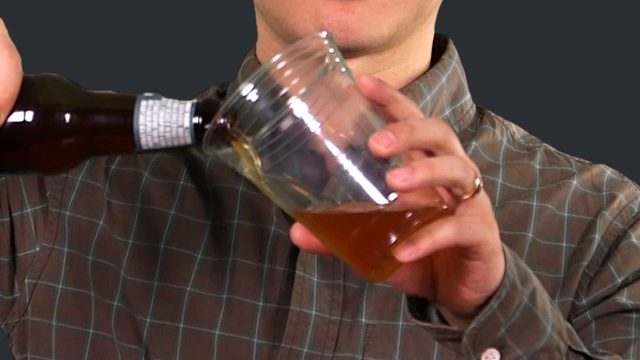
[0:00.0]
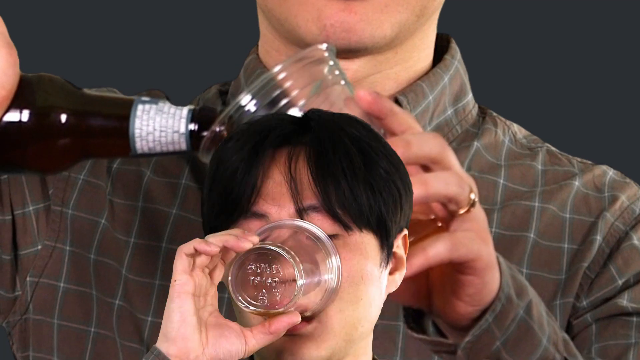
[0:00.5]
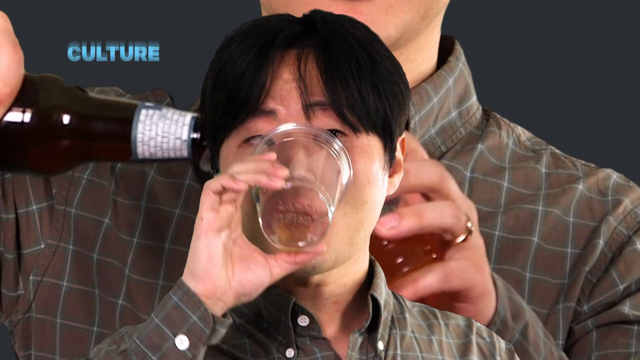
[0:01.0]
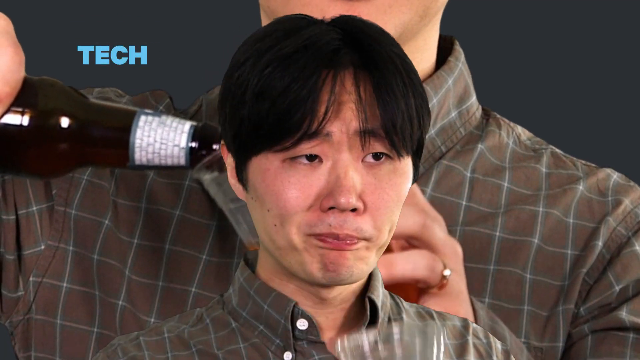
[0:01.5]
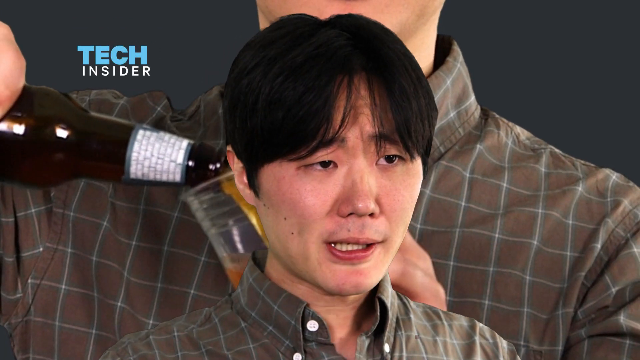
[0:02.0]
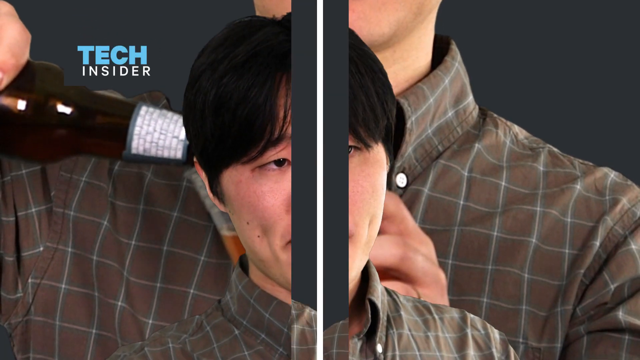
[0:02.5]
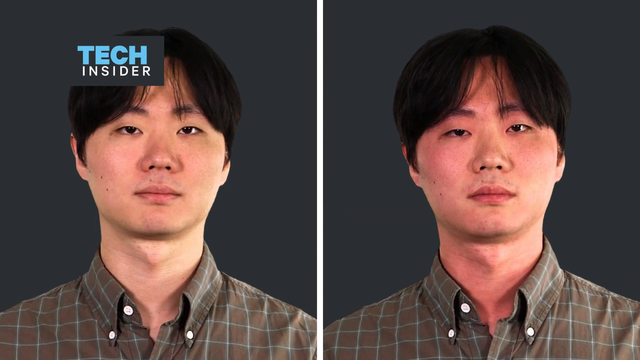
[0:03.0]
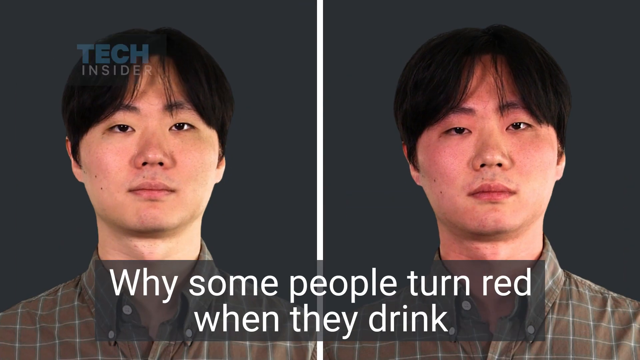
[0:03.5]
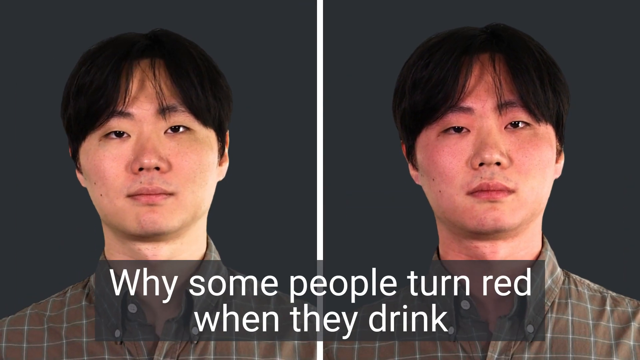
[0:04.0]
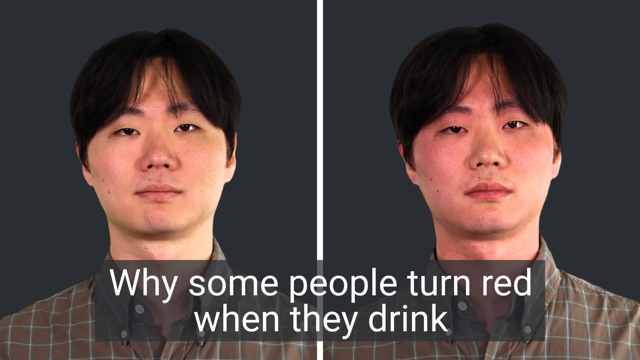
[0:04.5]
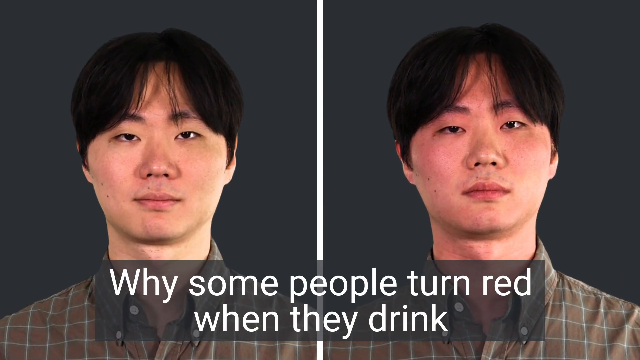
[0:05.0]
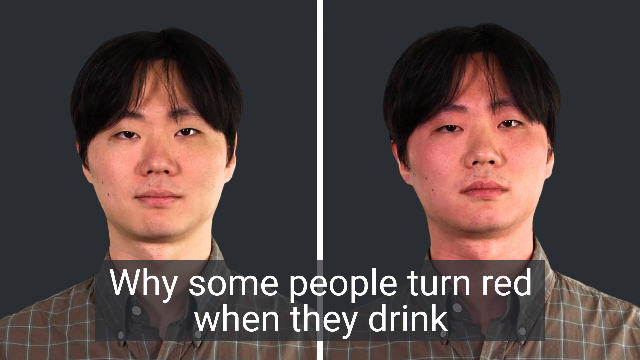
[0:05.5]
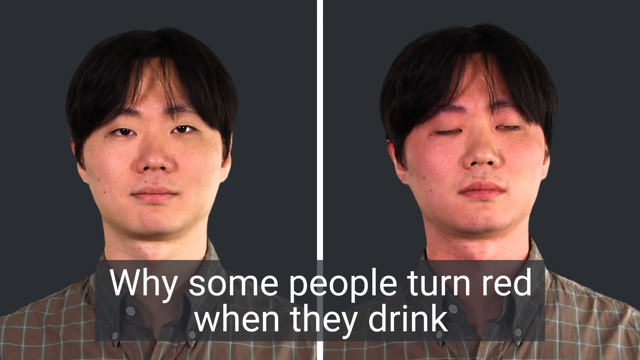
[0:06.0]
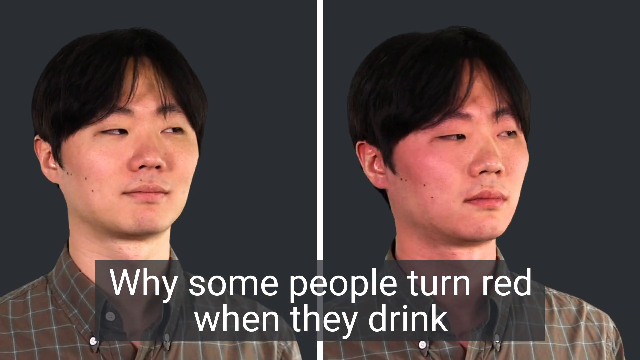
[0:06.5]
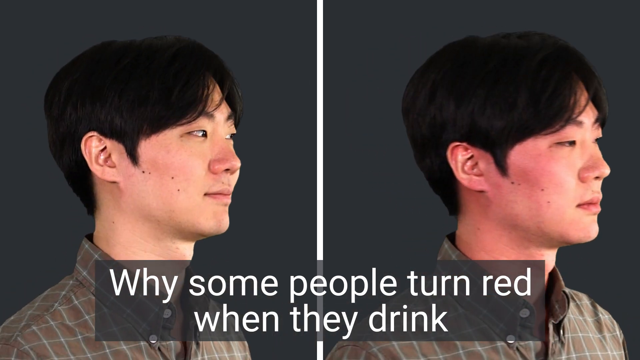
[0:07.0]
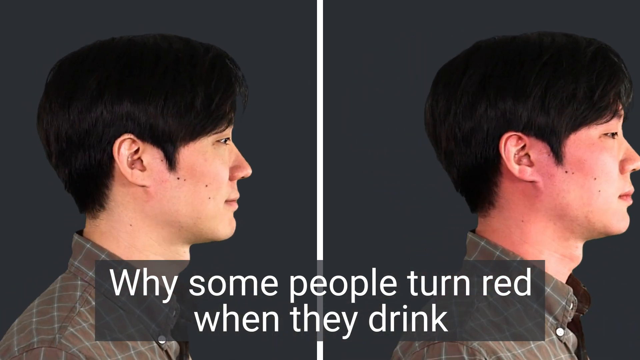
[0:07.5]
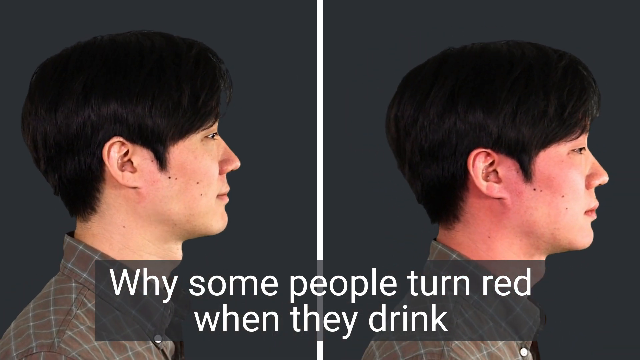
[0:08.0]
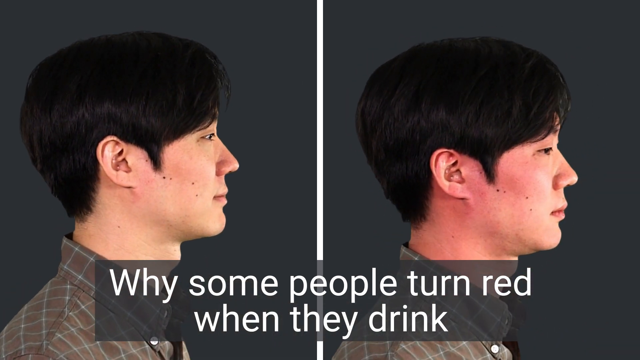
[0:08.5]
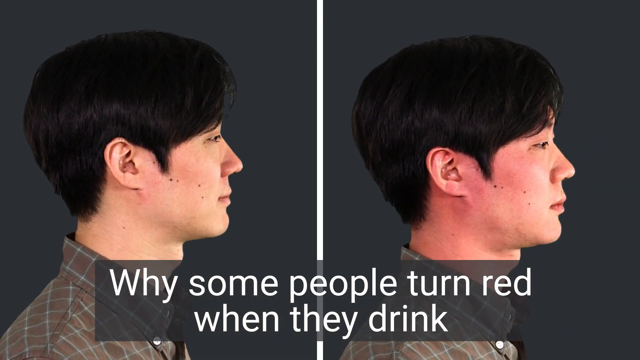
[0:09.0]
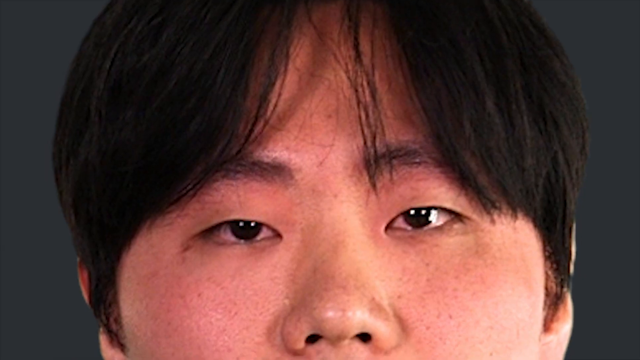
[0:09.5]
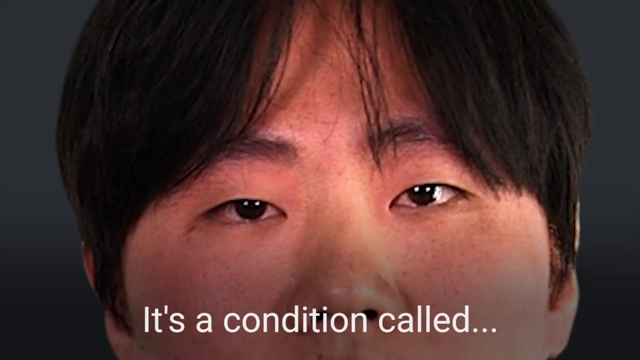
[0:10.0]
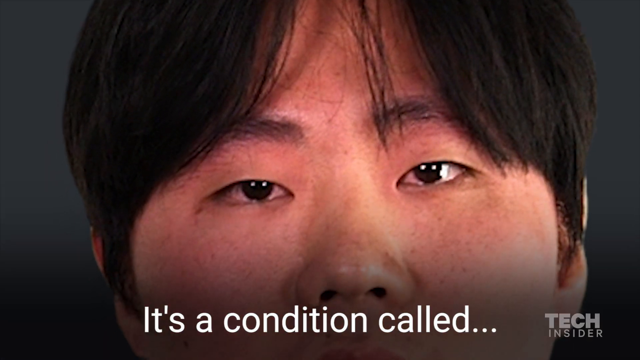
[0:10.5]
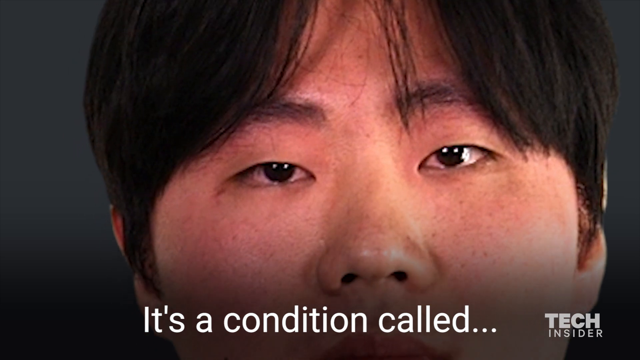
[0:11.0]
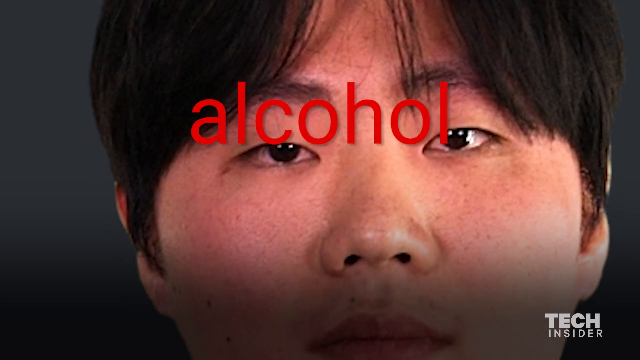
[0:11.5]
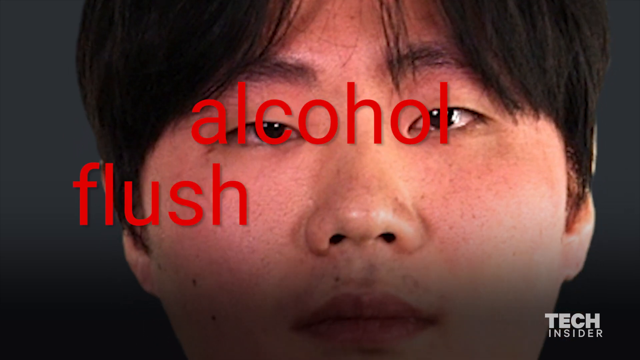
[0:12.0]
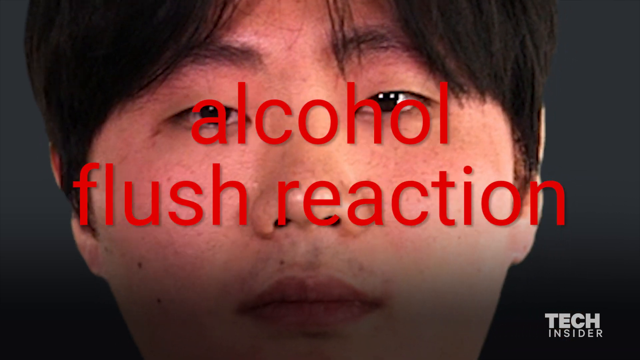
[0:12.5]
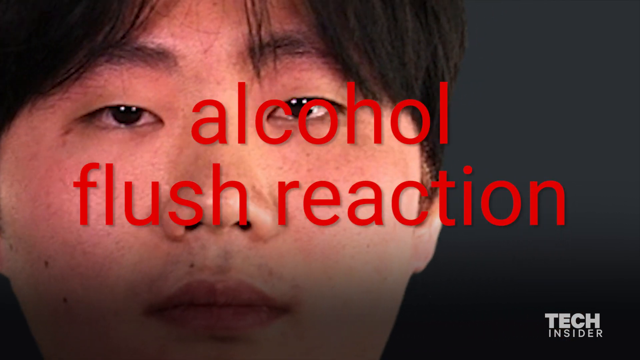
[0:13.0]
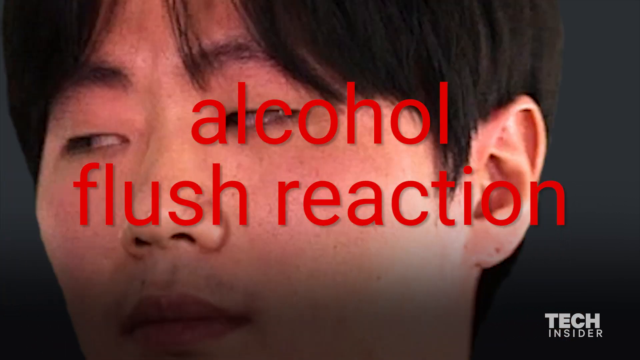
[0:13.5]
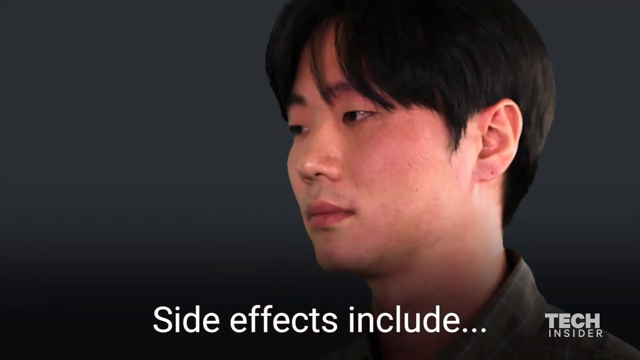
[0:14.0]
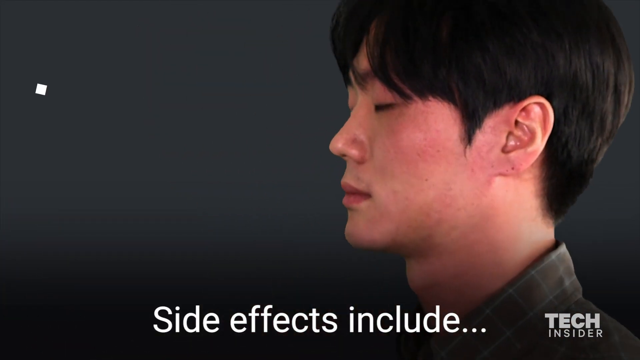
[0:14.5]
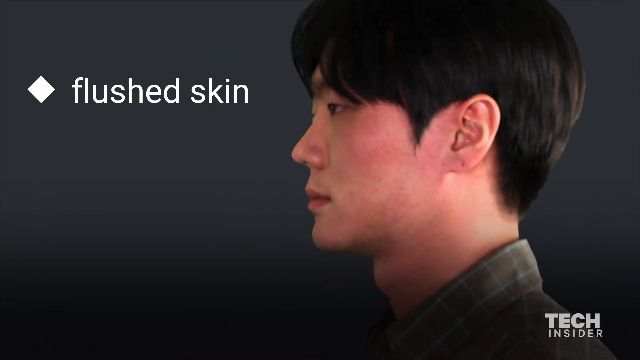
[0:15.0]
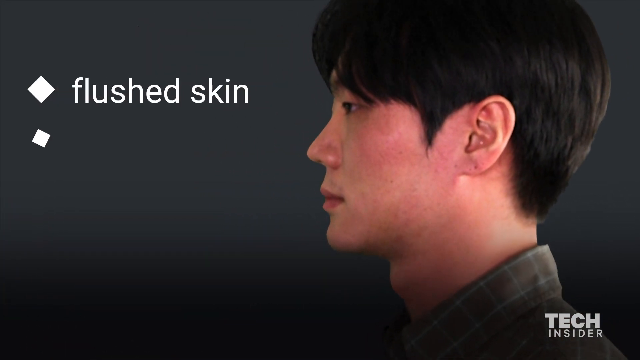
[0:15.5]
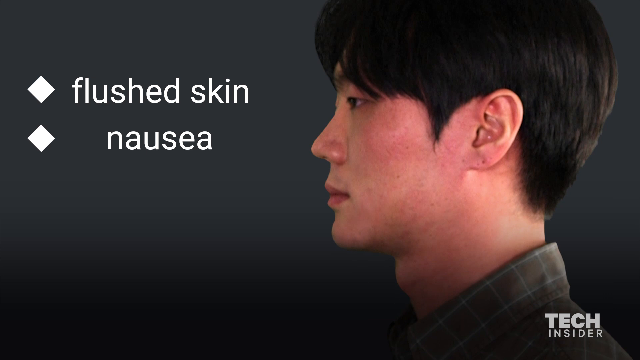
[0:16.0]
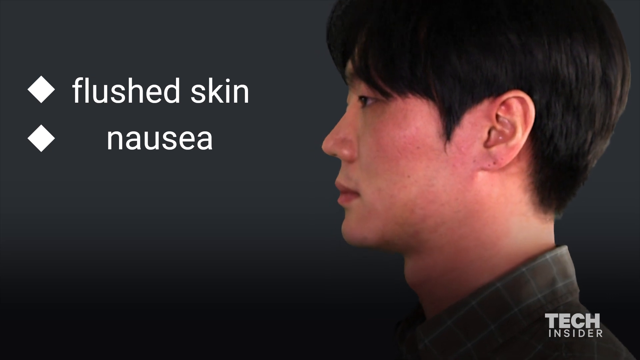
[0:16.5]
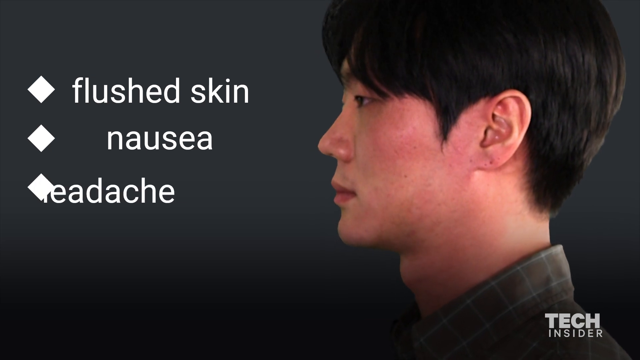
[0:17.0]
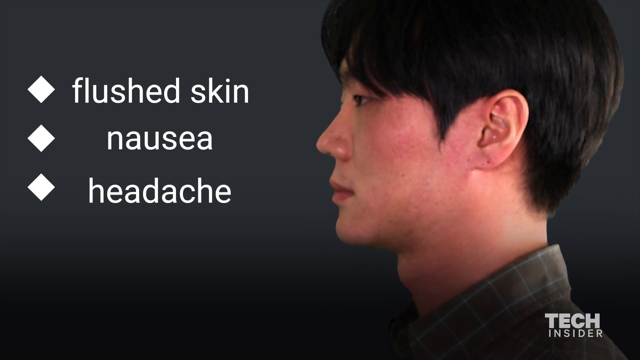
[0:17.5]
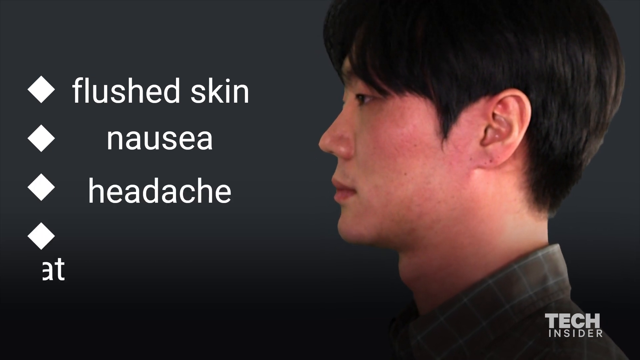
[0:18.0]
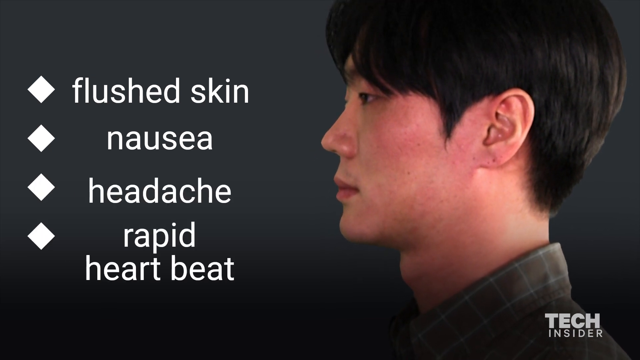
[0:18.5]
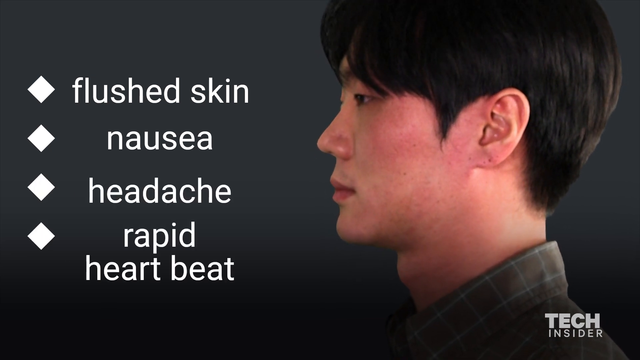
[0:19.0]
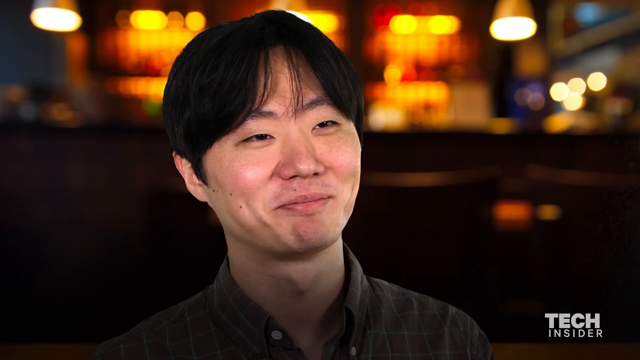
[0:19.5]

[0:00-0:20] A man pours a bottle of beer or something similar into a clear glass. The shot is zoomed in so that only his shoulders and chin are visible; he holds the bottle in his right hand and pours it into a glass in his left. In the top left corner the word "science" appears in blue block letters. A second image of the same man with the glass of beer is then superimposed over the first. In this second image the neck and head of the man, who has straight black hair, are visible; he holds the glass in his right hand and drinks from it, his hand raised to his face. The text in the top left corner changes to "tech insider". The man whose head is visible lowers the cup he has been drinking from and swallows, with a serious expression on his face. Next, two photos of the same man appear side by side. He wears a brown shirt with the top button undone, and the tech insider logo remains in the upper left corner. The background is dark grey, and the neck and face of the man are visible in both the left and right photos; the only difference is that his face is slightly more red in the photo on the right. White text across the bottom of the screen reads "why some people turn red when they drink". Both men move their heads slightly but are standing still. Then both turn to their left, seen in profile and facing the right of the screen. A close-up of the man with the red face follows, and the camera zooms in on his eyes, nose and forehead. White text at the bottom reads "it's a condition called", and red letters then appear reading "alcohol flush reaction". The camera pans slightly down the face of the man with the red complexion. A similar shot then shows all of the man's face and neck; he turns to his right, facing the left side of the screen. White text across the bottom reads "side effects include", and a list appears at the left of the screen in white text: "flushed skin, nausea, headache, rapid heartbeat".